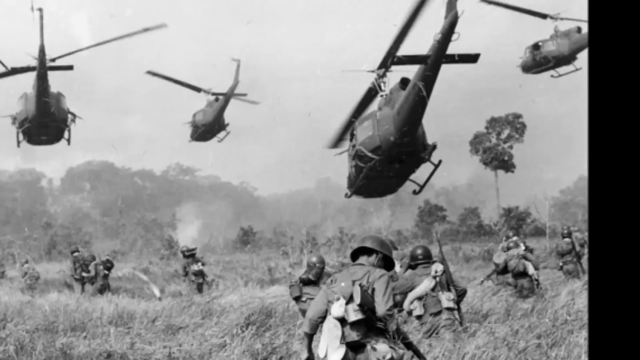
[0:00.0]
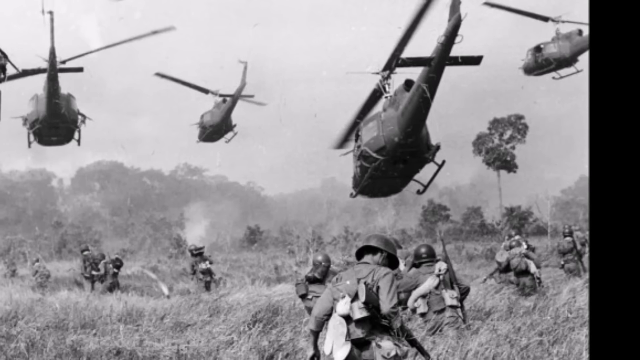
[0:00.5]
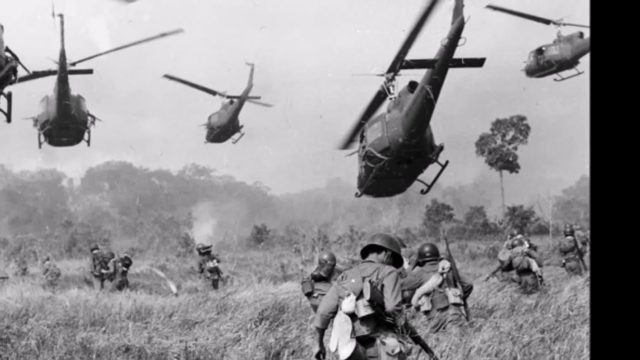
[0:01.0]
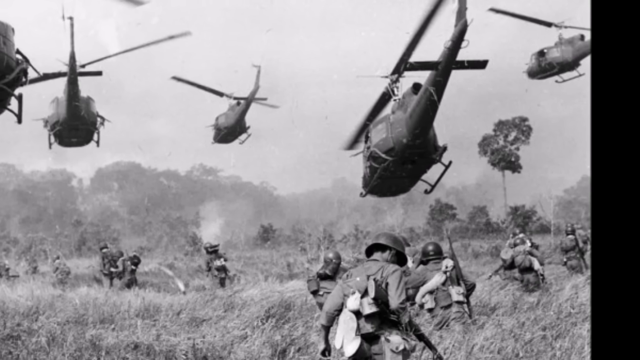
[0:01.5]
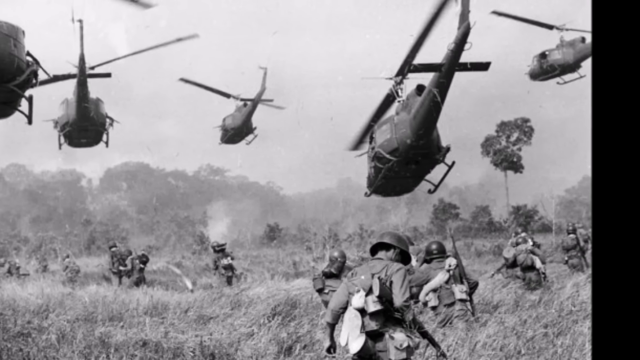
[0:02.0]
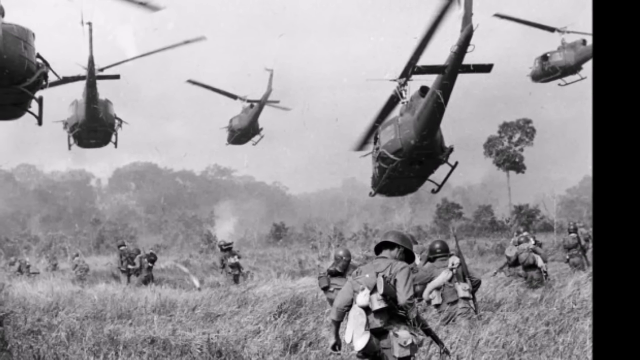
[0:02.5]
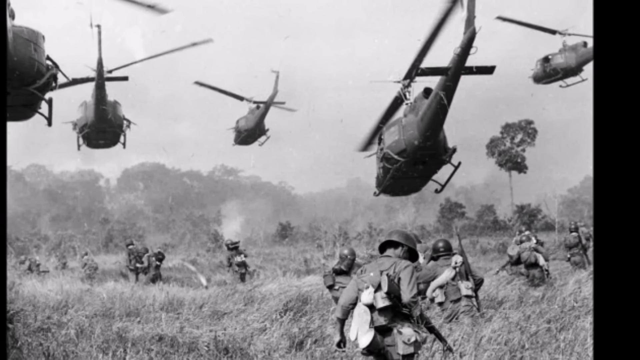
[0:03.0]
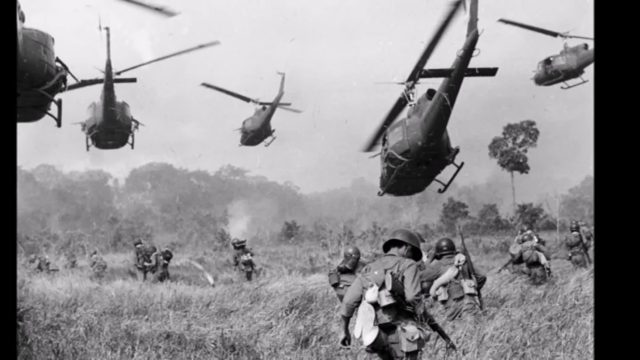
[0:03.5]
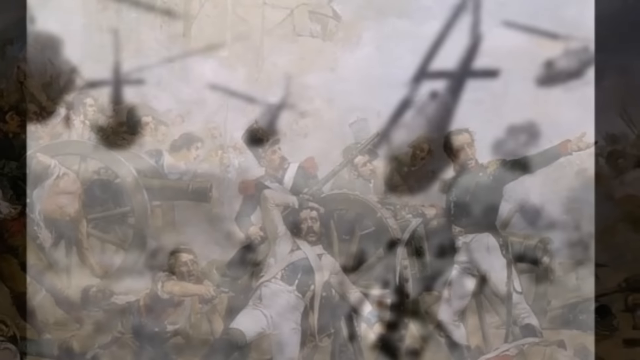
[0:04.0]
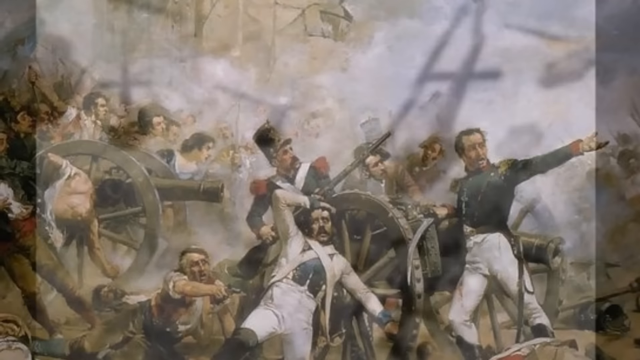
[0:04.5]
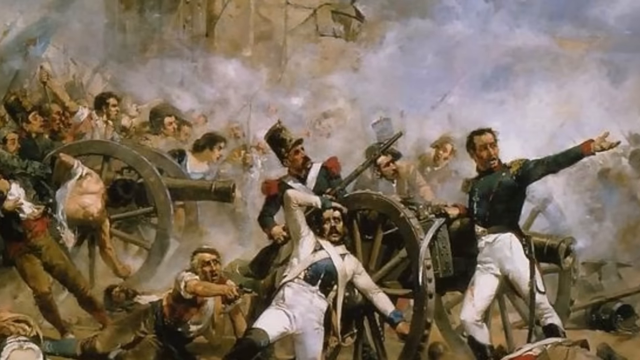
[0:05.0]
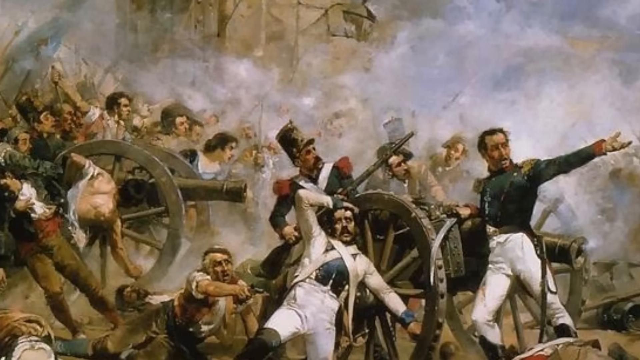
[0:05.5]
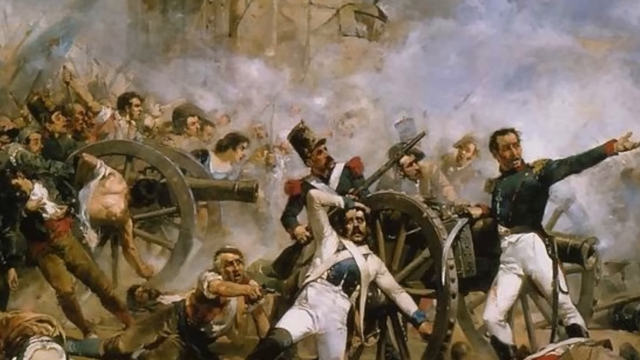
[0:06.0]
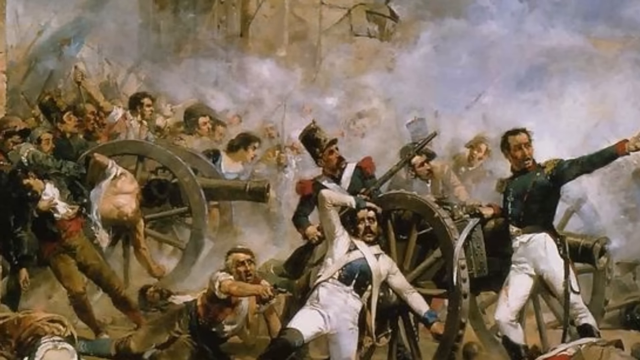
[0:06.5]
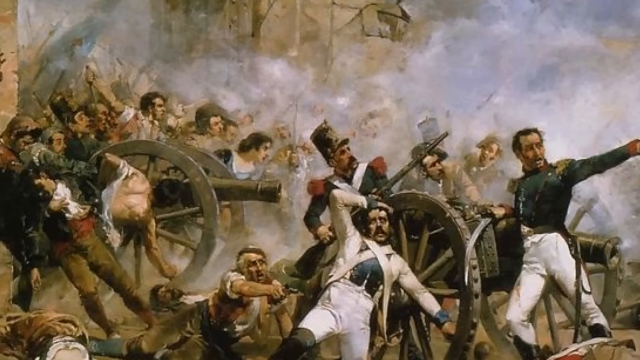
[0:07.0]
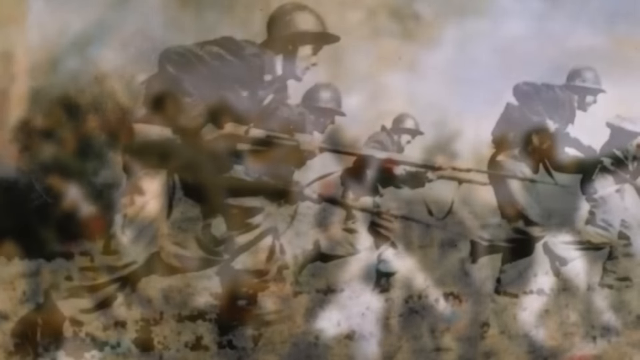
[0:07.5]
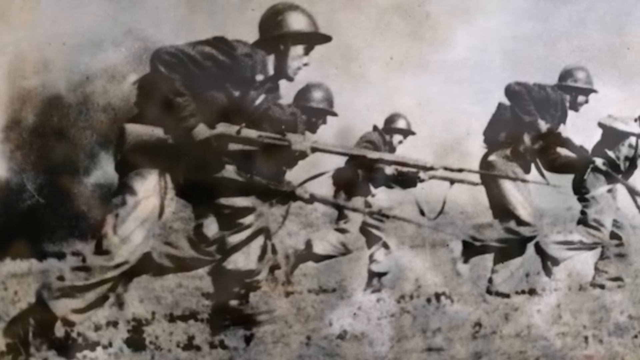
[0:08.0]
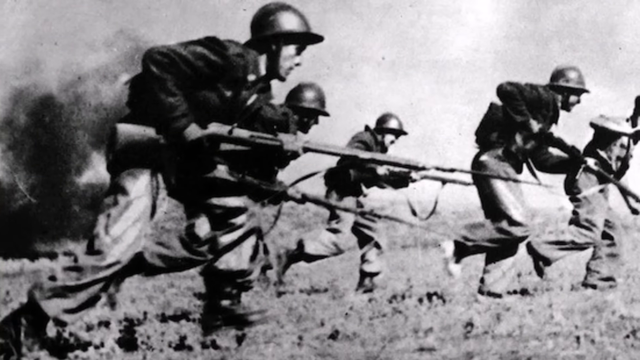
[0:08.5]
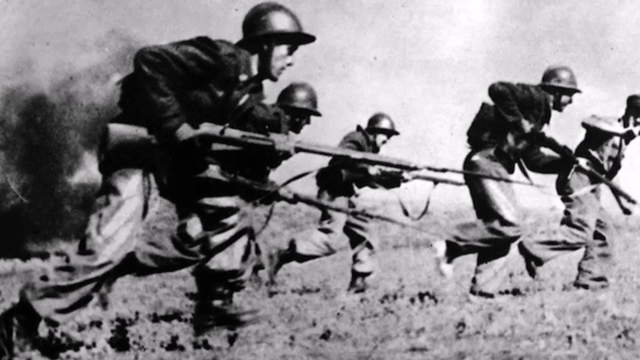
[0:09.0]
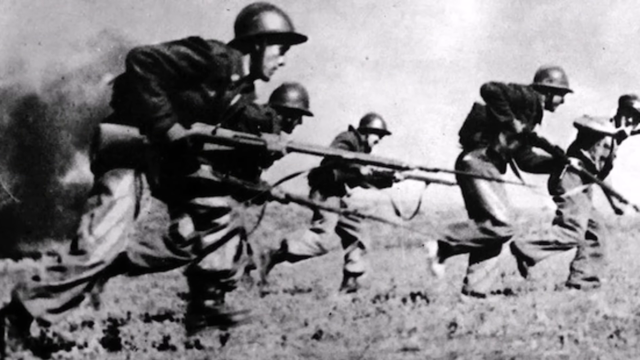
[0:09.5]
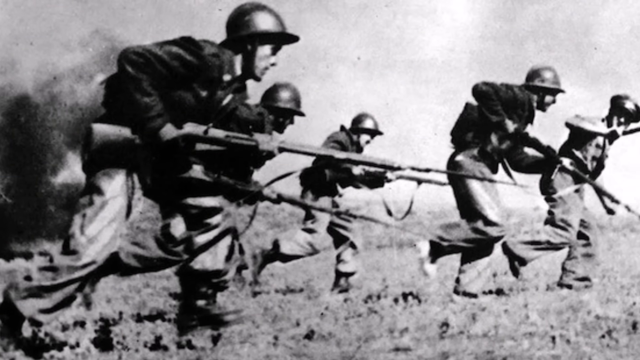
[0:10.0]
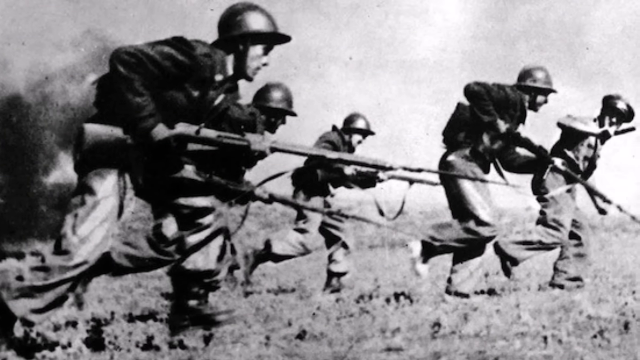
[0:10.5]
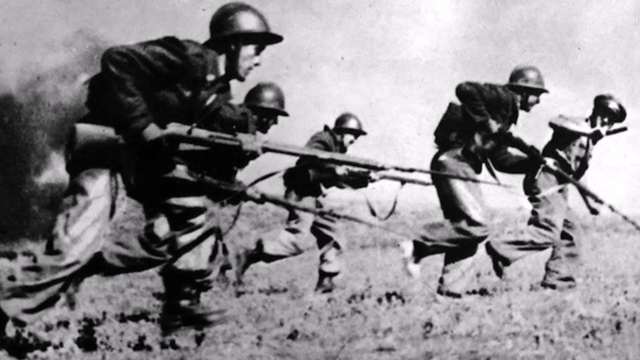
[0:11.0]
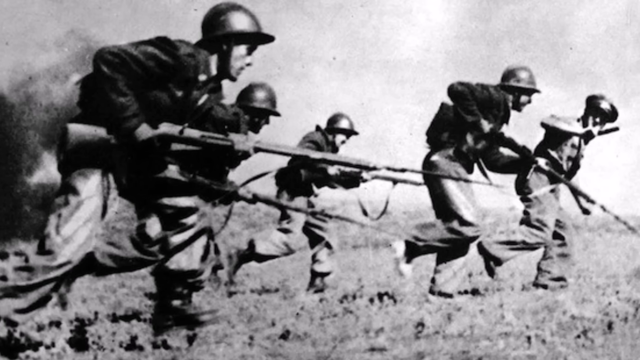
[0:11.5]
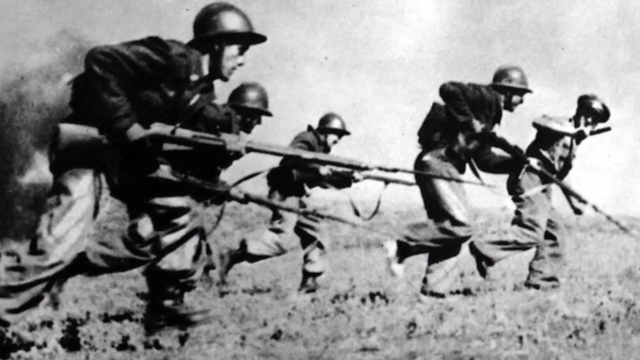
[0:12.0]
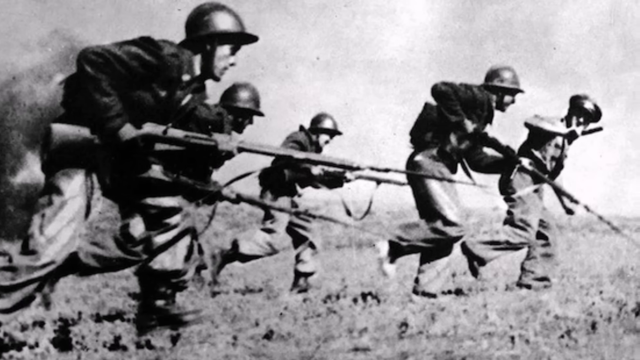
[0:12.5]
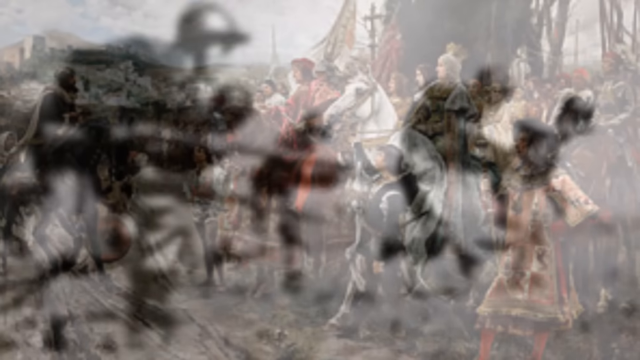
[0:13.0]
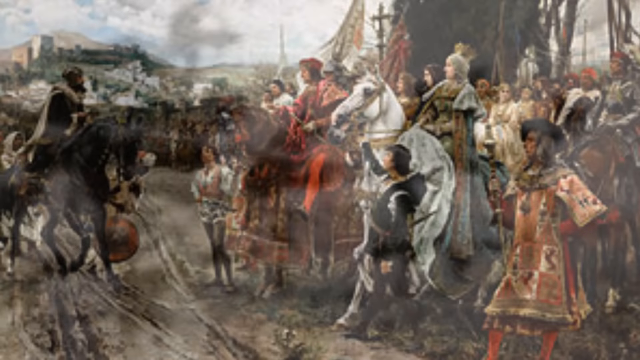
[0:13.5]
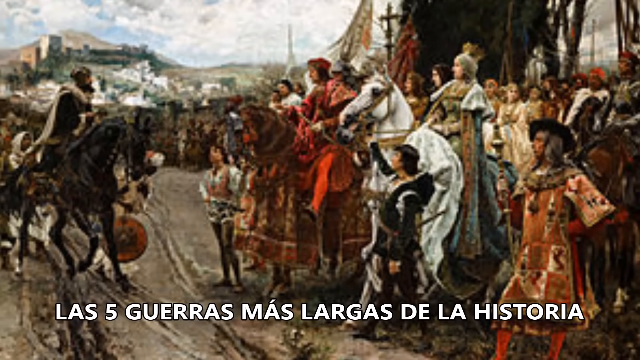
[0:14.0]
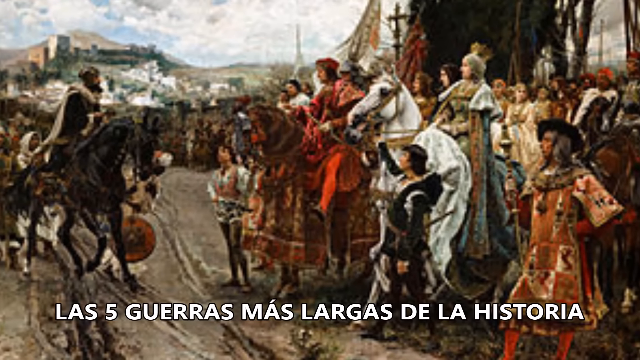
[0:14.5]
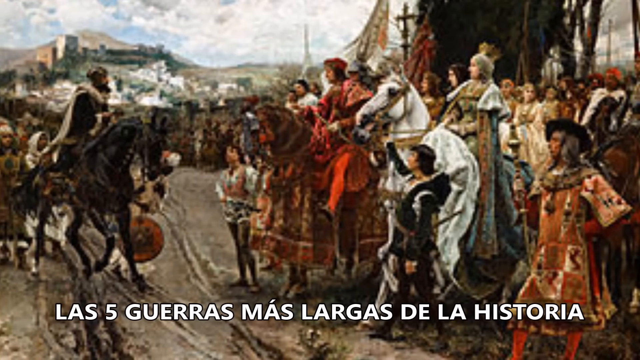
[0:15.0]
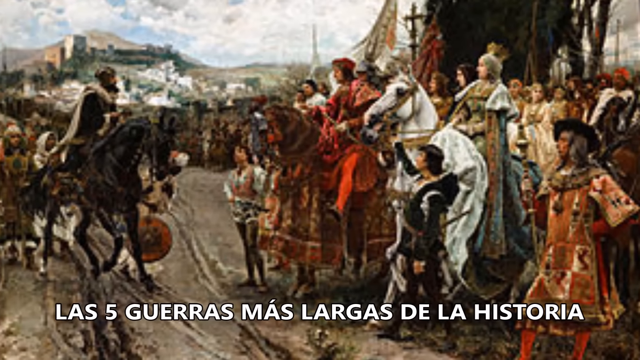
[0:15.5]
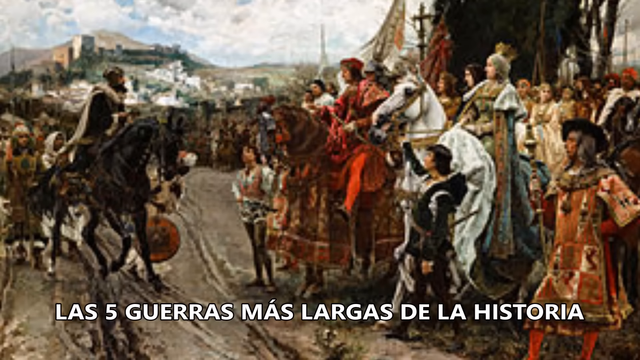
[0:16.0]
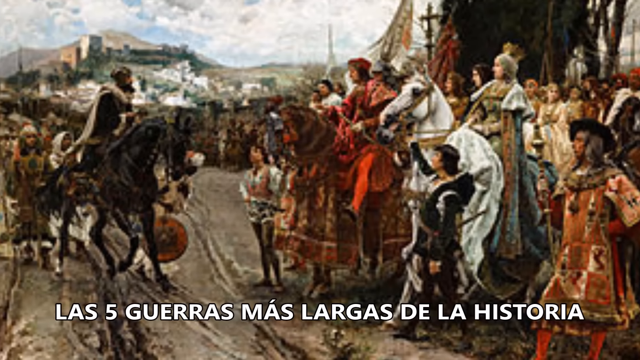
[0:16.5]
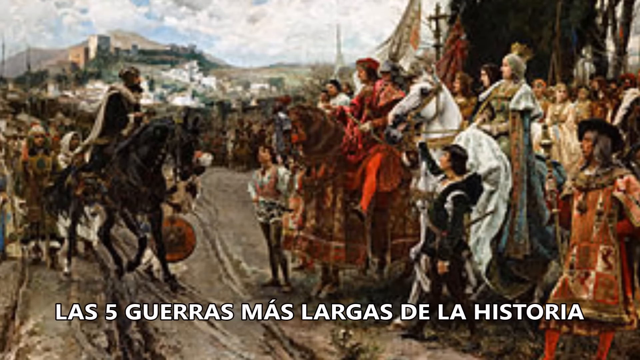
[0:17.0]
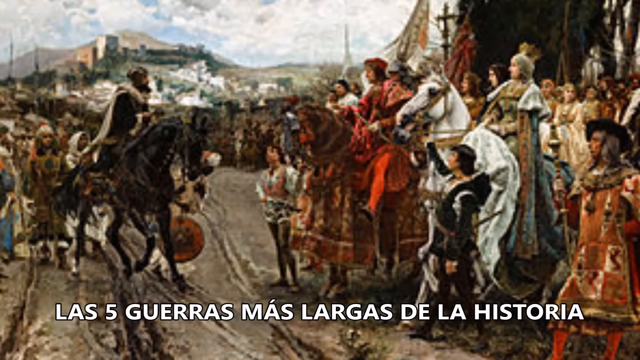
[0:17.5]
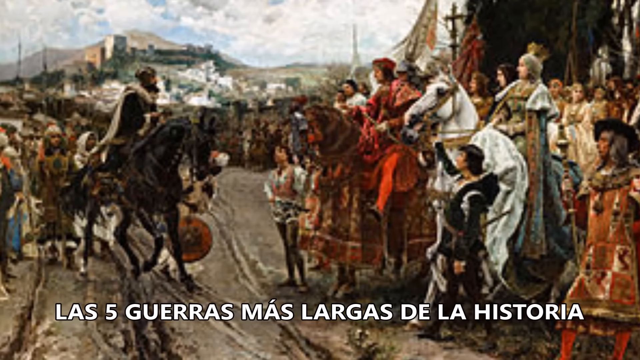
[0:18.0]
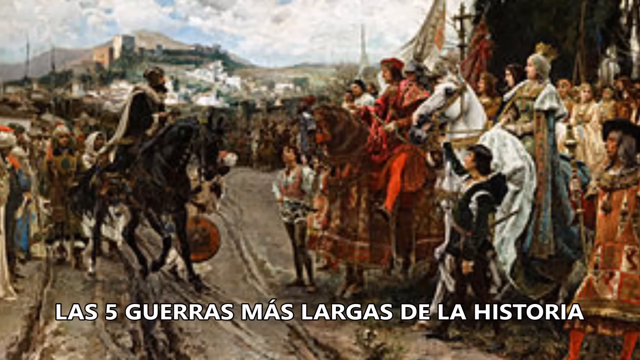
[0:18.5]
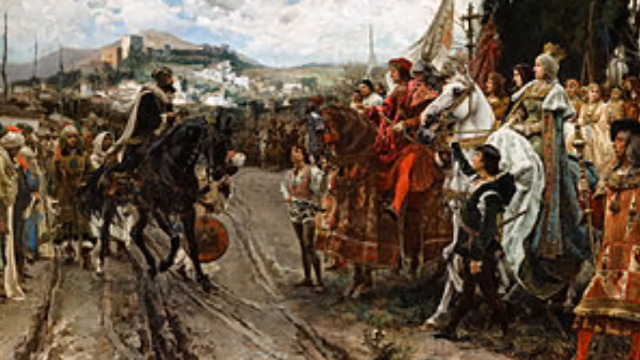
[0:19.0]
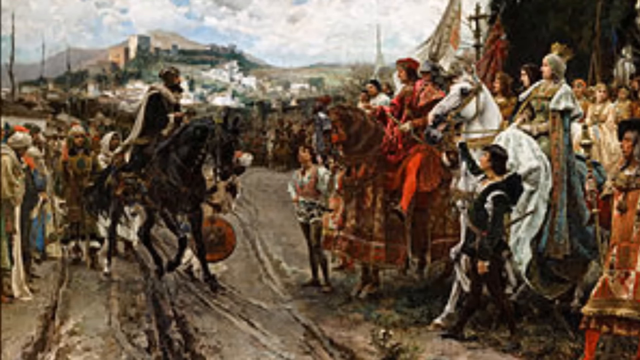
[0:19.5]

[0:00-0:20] The video relates to warfare. It opens with an image of the Vietnam War: a black and white photo of about a dozen troops advancing through grassland, wearing tin helmets with rifles over their shoulders. Above them are four helicopters of a sort of Huey type, and the scene looks like it is from the 1960s. Next comes a Napoleonic Wars battle in which French troops in blue uniforms with red epaulettes are gathered around a couple of cannons, with what look like civilians behind the soldiers. Another black and white image follows, showing troops advancing from left to right in a mixture of helmets, dark jackets and pale trousers. A shell appears to have gone off behind them, and they are led by an officer in a flat cap; this image also looks like the 1930s. The next image carries the Spanish caption "Las 5 mas largas de la historia". It shows a sort of Renaissance procession of an ornately dressed Christian force in silks, with rulers riding horses whose bodies are covered in fabric. Several dozen of them are on the right-hand side of the picture. On the left-hand side there is a castle and a few people who appear to be Muslims, judging by their armour and round shields; the scene possibly depicts the surrender of the Muslims in Spain to the forces of Ferdinand and Isabella.